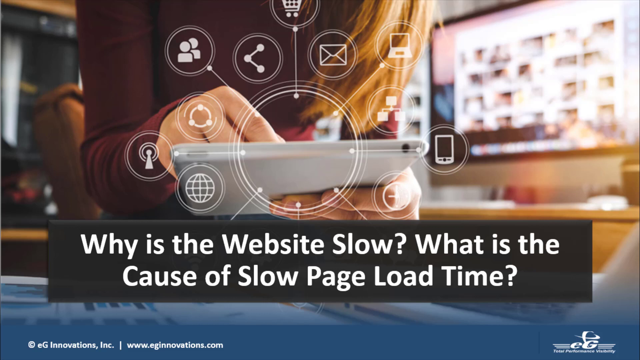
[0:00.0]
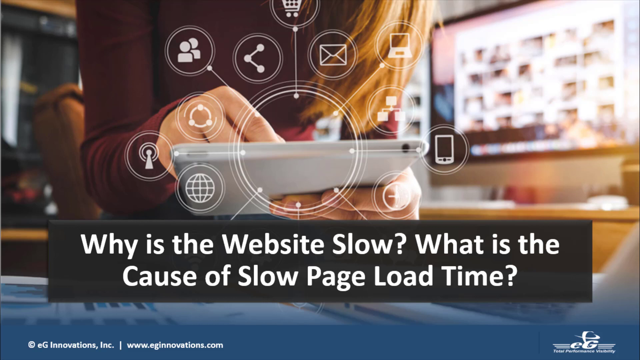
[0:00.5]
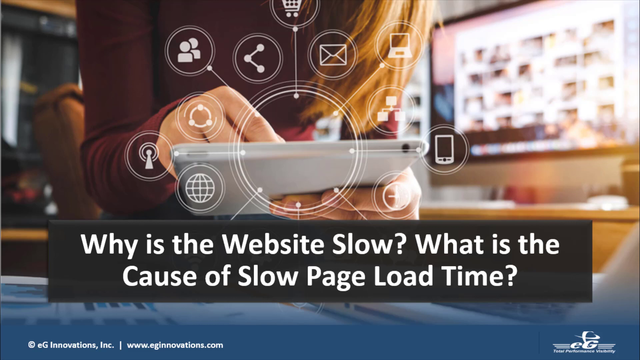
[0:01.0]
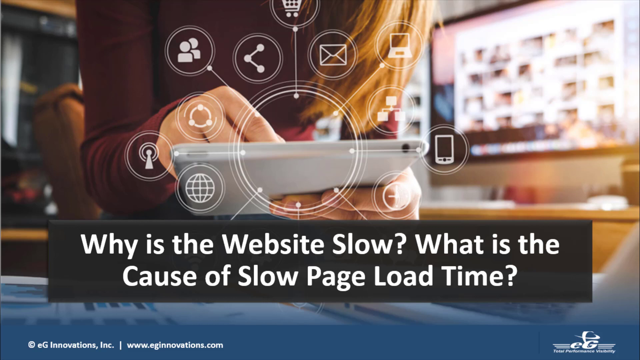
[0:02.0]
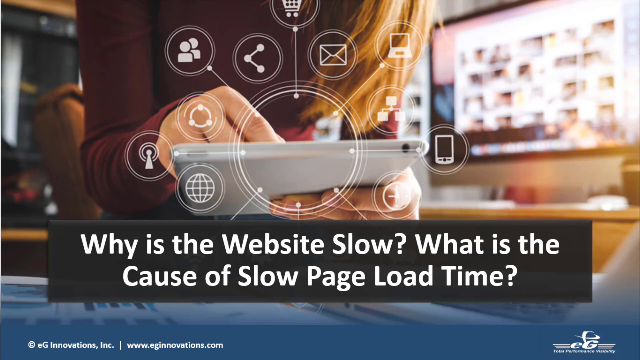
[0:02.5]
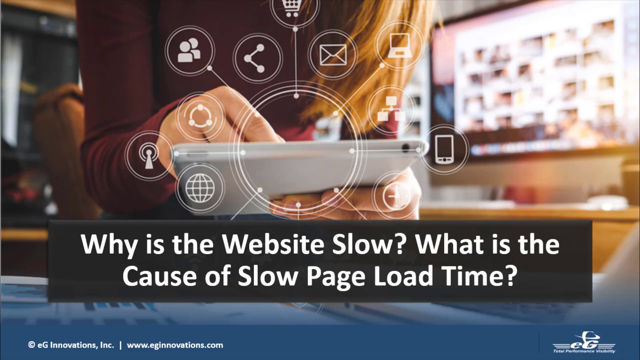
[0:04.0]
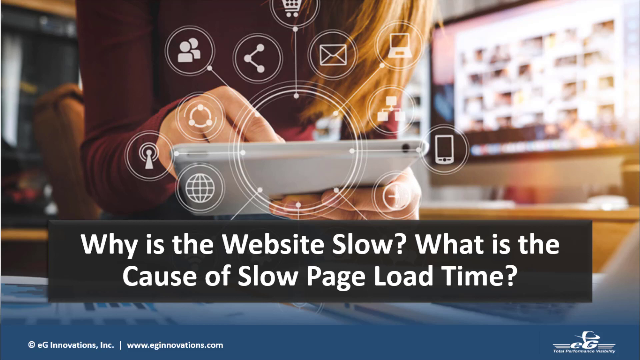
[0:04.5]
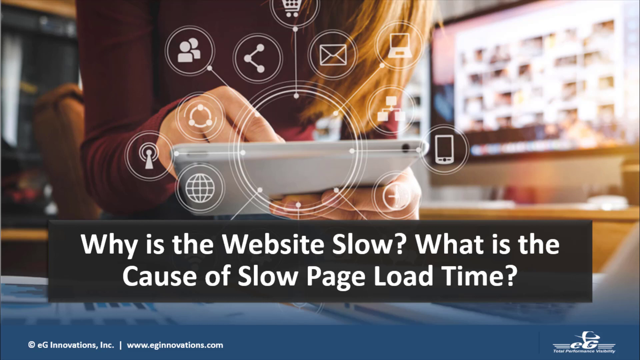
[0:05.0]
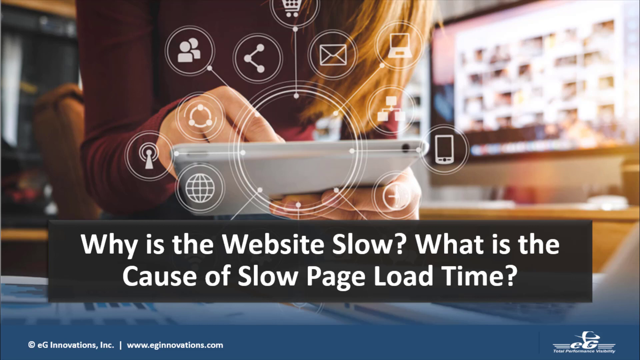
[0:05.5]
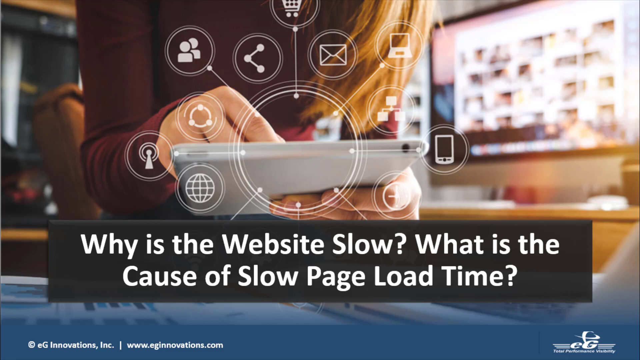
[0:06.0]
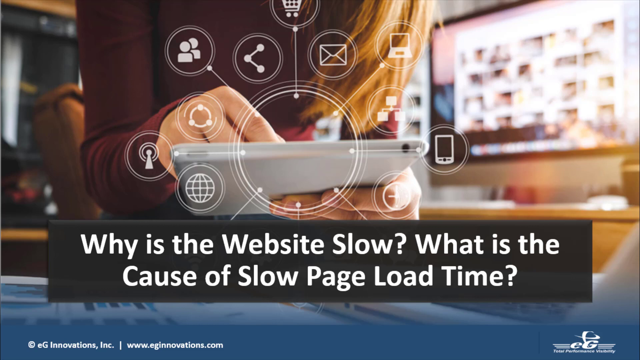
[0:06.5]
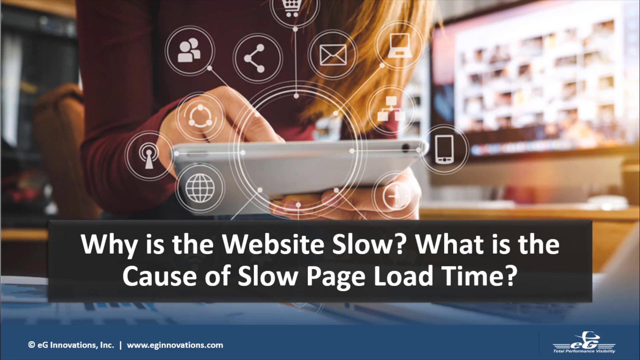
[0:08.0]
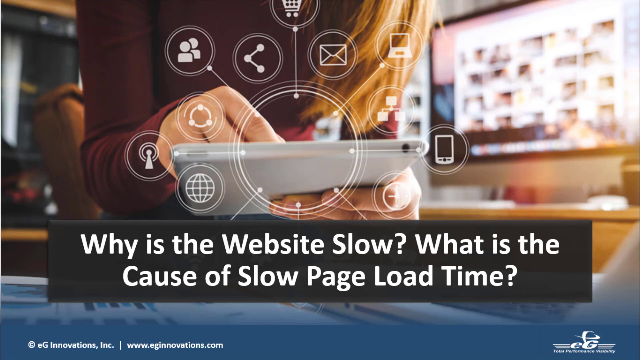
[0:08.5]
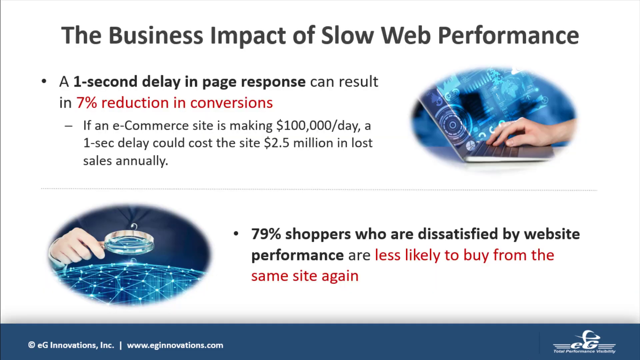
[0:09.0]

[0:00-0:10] The video opens on a still image that looks like a stock photo of a woman holding what appears to be an iPad. She is visible only from below the shoulders down to her hands, which hold the iPad near the center of the picture. Icons in circles surround the iPad, such as an icon for email, one for sharing, and other internet-related icons. Below that, in the bottom third of the screen, a question is written: "Why is the website slow? What is the cause of slow page load time?" Toward the end, the image quickly transitions to another screen titled "The Business Impact of Slow Web Performance," with some statistics relating to that.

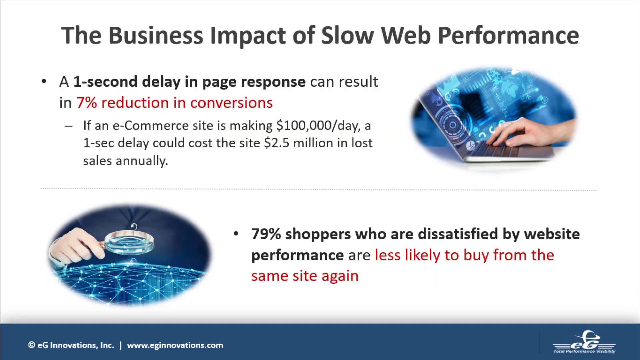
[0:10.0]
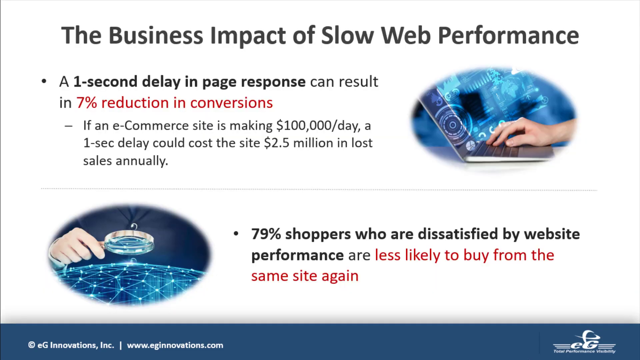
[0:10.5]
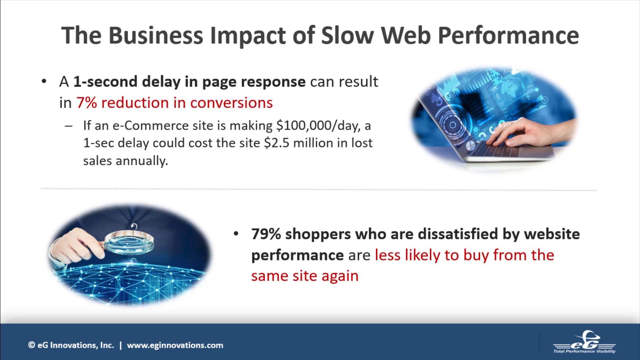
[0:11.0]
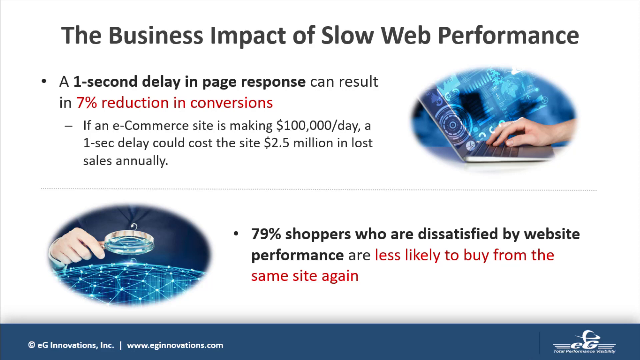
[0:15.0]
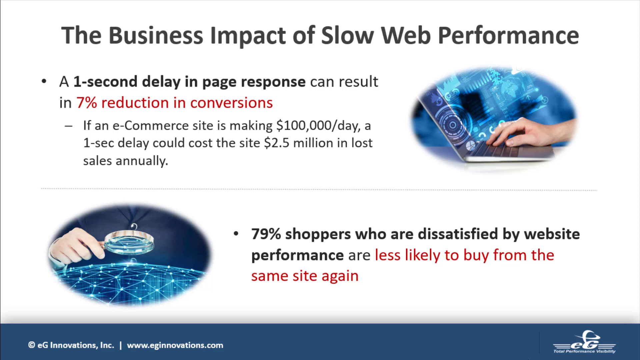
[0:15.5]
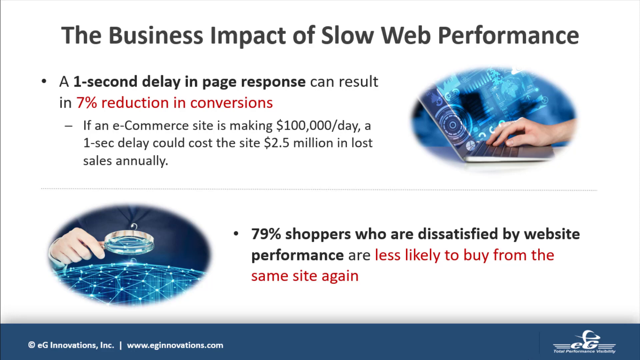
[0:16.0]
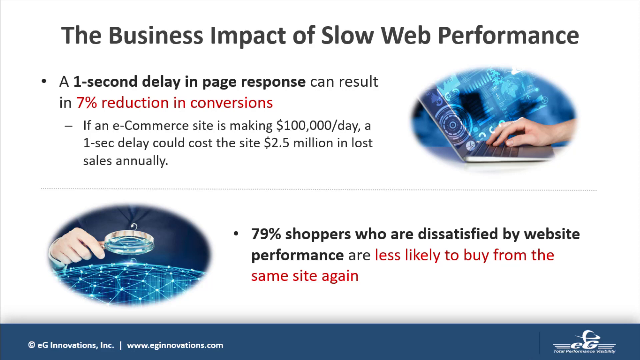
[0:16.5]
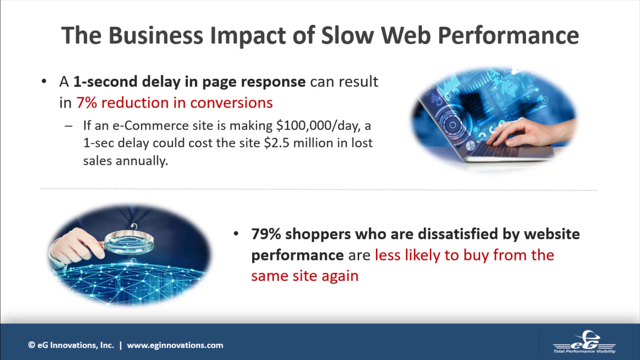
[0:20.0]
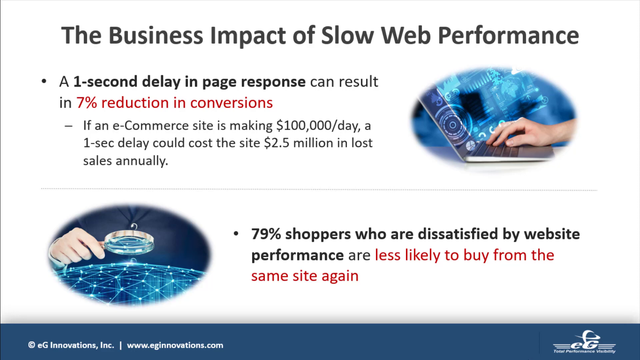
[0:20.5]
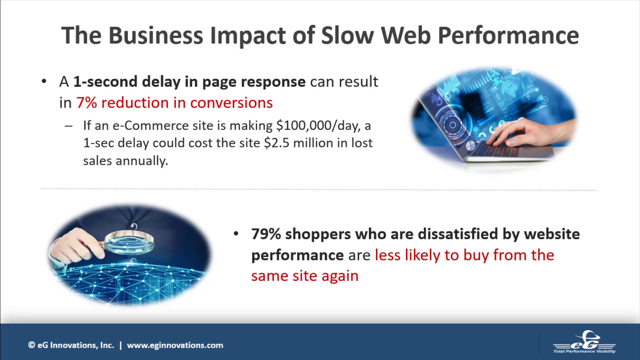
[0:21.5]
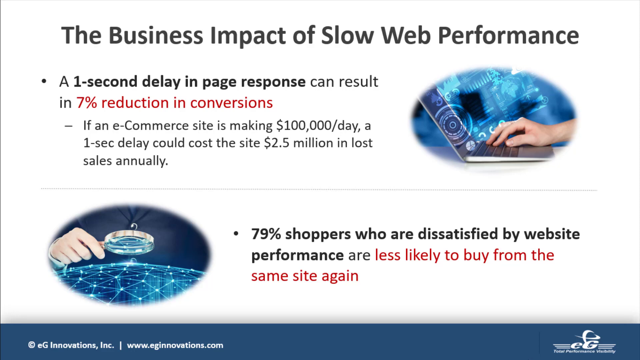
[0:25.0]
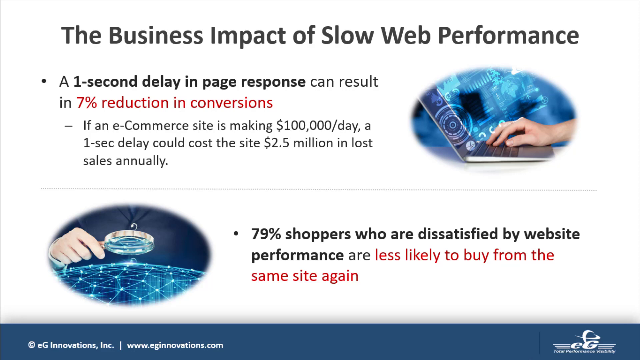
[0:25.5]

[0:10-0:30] The screen titled "The Business Impact of Slow Web Performance" is shown, with the title at the top; it looks like a slide of a PowerPoint presentation. Below the title are two sections separated by a very thin gray line divider. In the top section, right below the title, a bulleted line on the left says "A 1-second delay in page response can result in 7% reduction in conversions," with a little more information and statistics underneath. To the right of it is a stock photo in an oval frame of someone's right hand resting on a laptop keyboard. In the bottom section, below the divider, on the left is an oval stock photo of someone holding a magnifying glass in their right hand and looking down at some sort of virtual digital network connected with lines and dots. To the right of that, another bullet point says "79% shoppers who are dissatisfied by website performance are less likely to buy from the same site again."